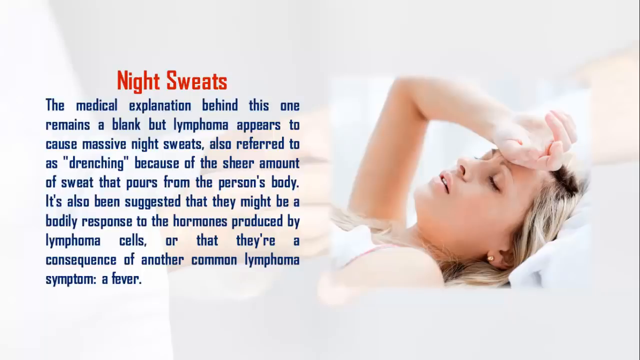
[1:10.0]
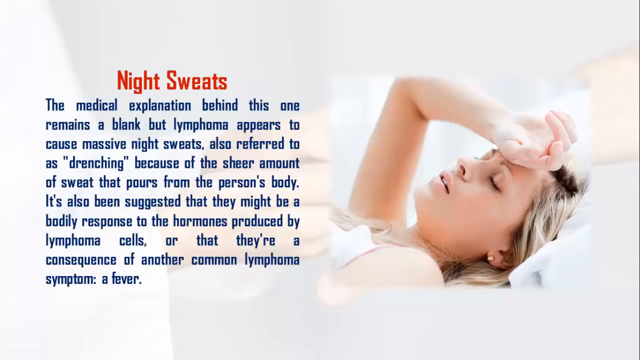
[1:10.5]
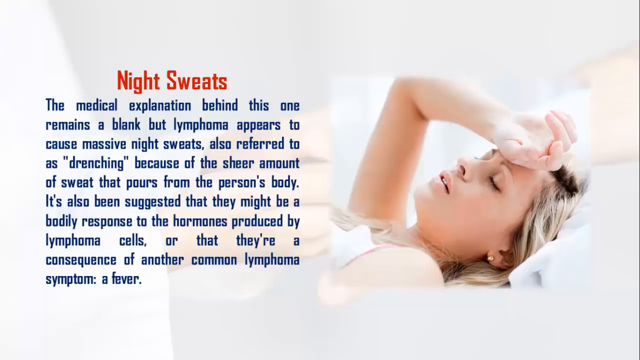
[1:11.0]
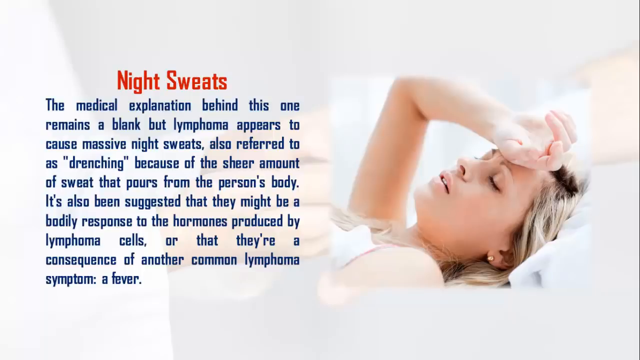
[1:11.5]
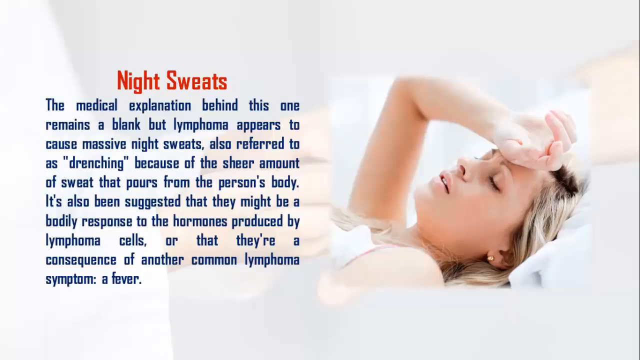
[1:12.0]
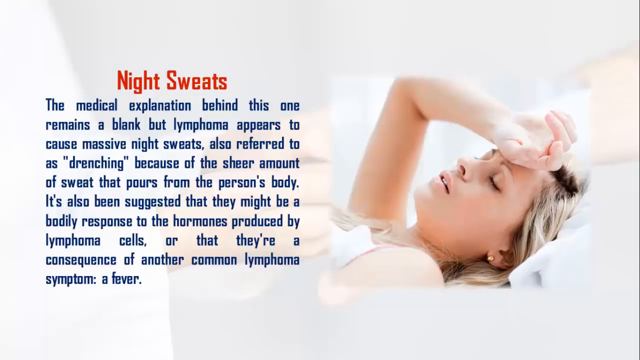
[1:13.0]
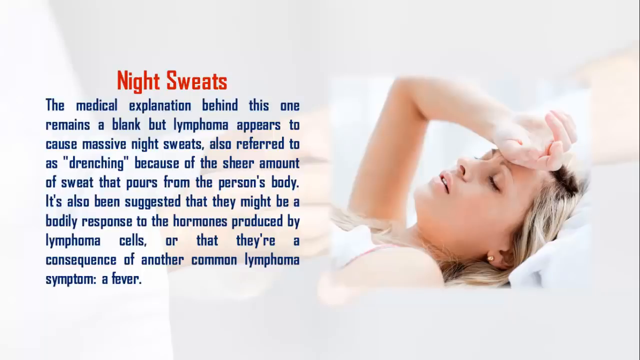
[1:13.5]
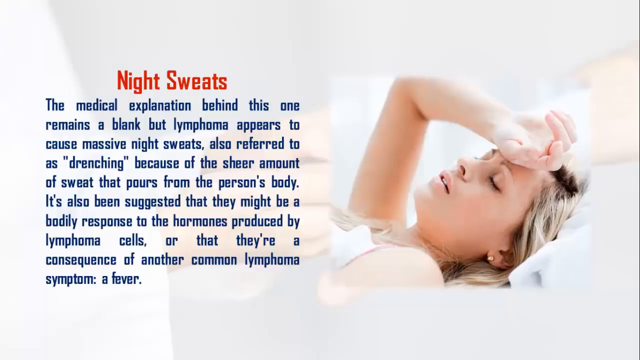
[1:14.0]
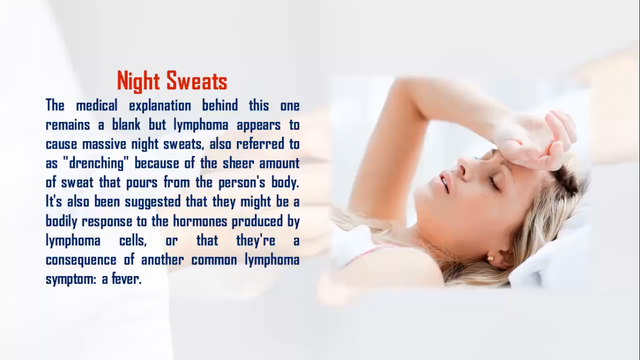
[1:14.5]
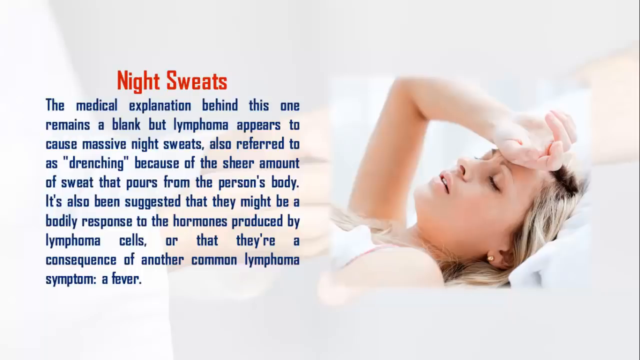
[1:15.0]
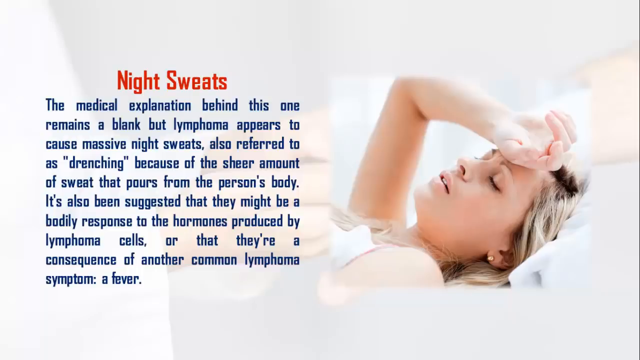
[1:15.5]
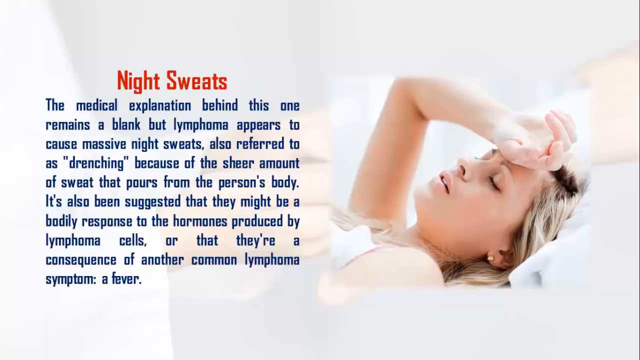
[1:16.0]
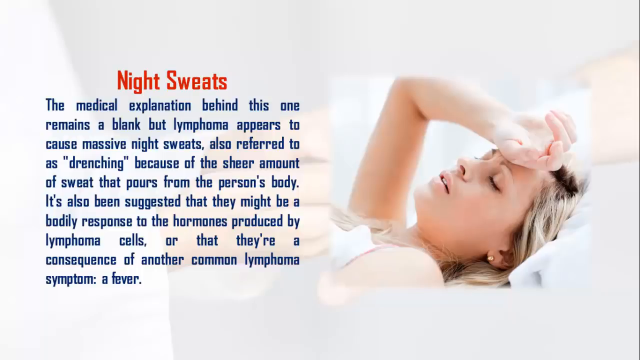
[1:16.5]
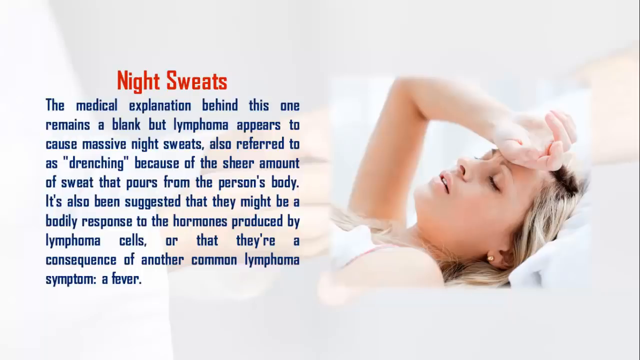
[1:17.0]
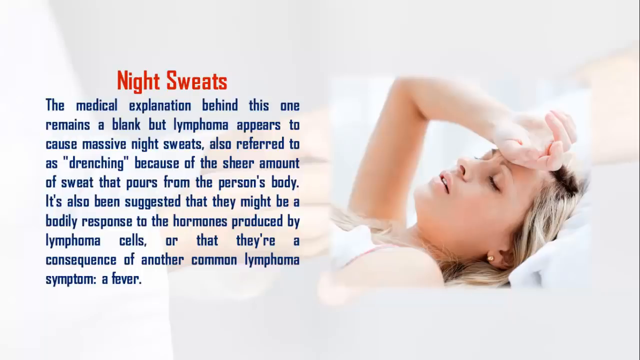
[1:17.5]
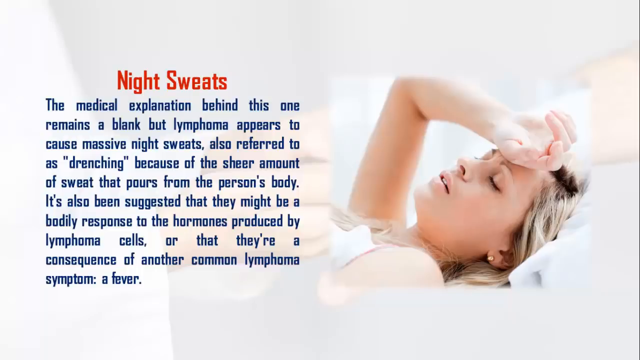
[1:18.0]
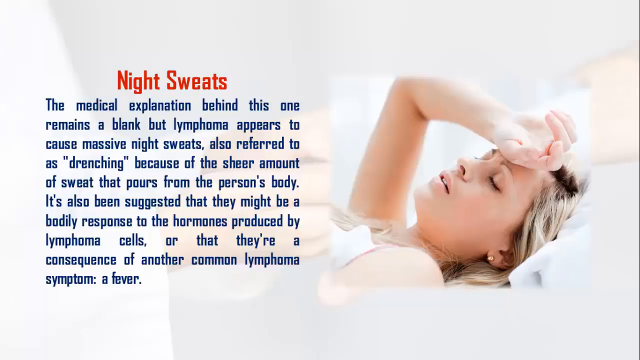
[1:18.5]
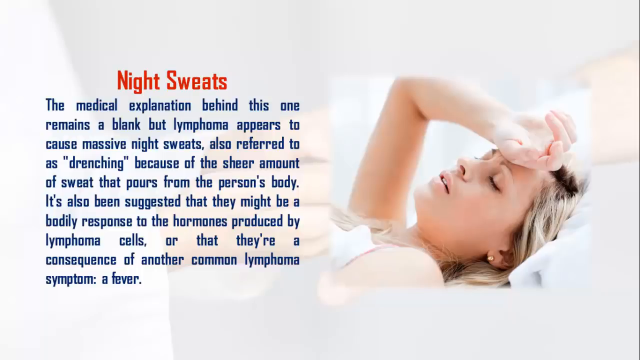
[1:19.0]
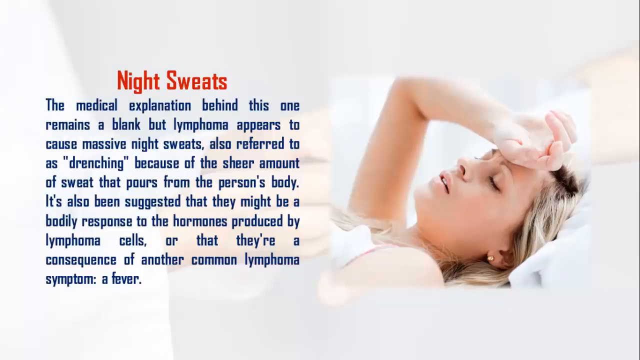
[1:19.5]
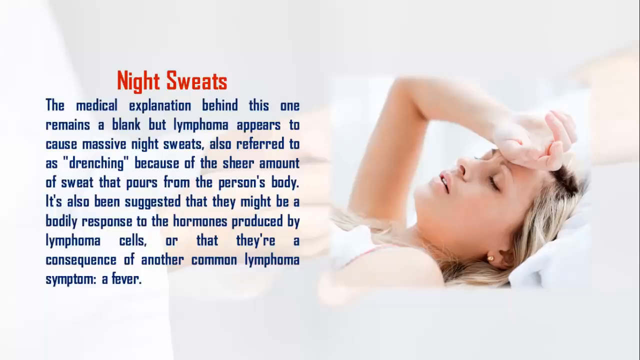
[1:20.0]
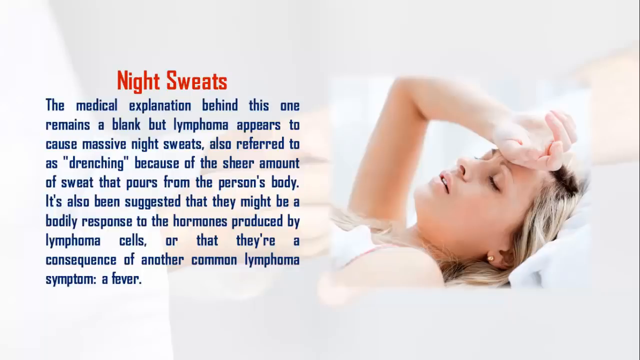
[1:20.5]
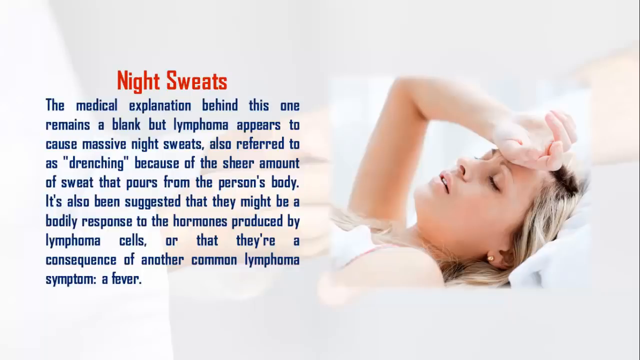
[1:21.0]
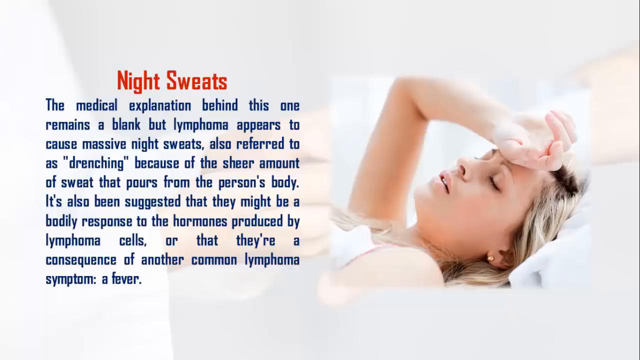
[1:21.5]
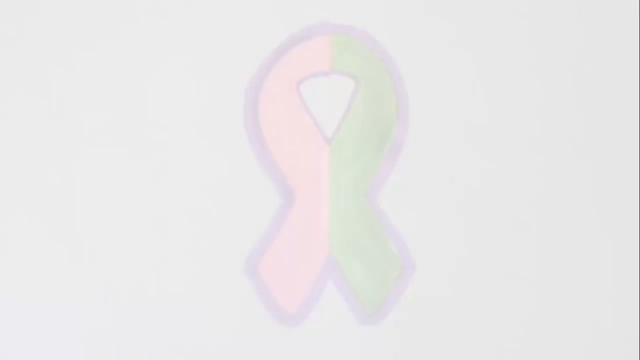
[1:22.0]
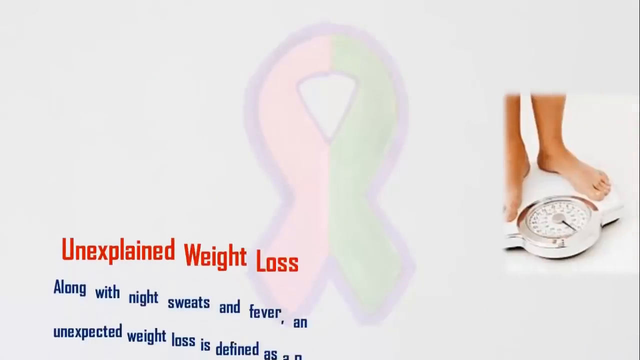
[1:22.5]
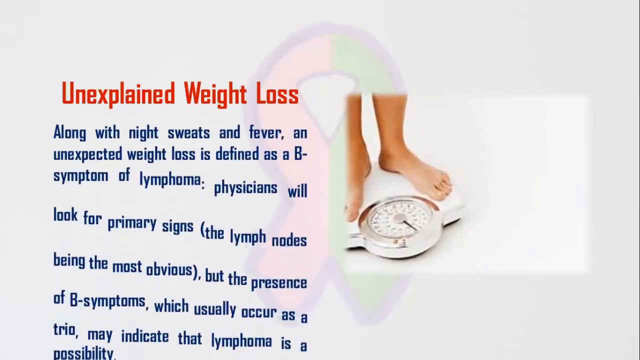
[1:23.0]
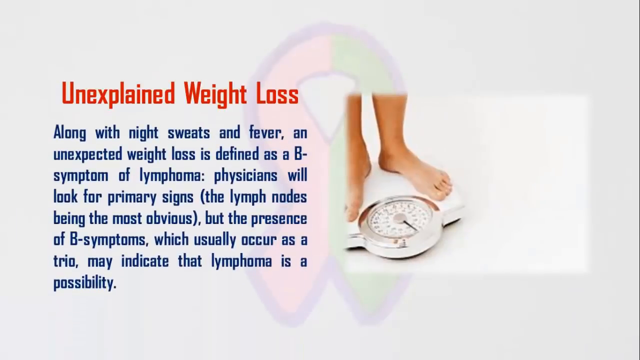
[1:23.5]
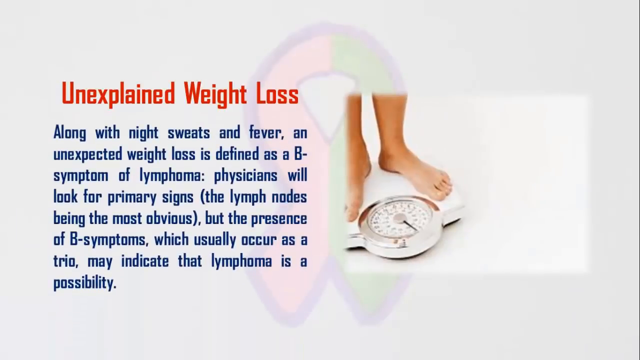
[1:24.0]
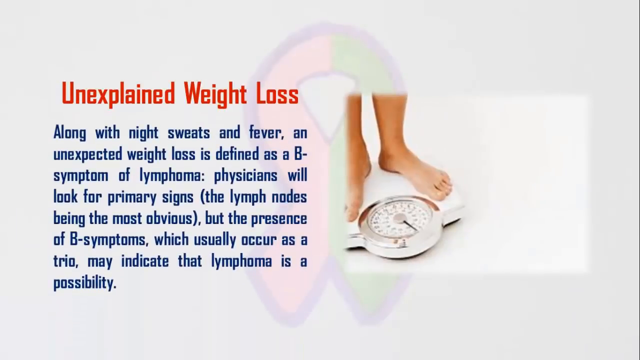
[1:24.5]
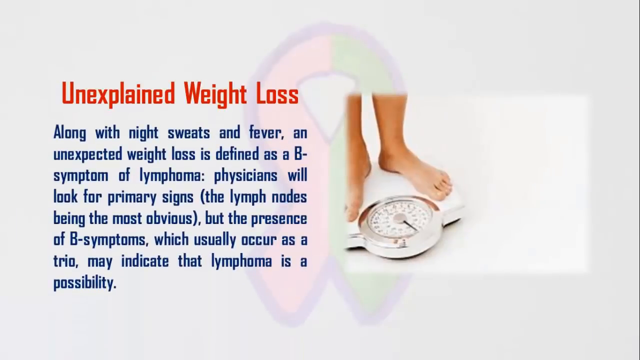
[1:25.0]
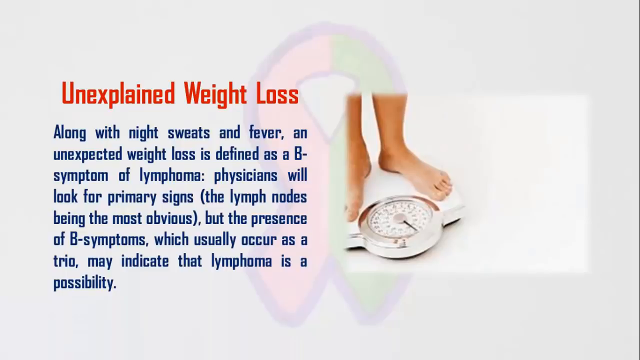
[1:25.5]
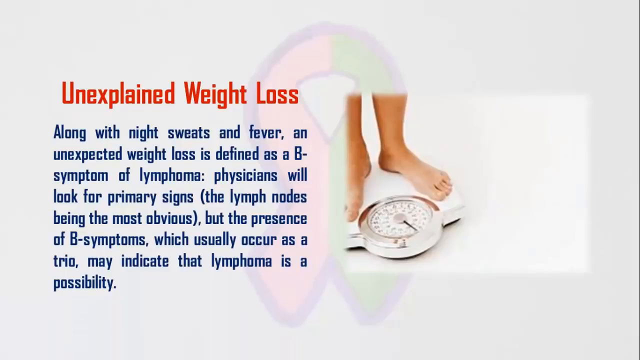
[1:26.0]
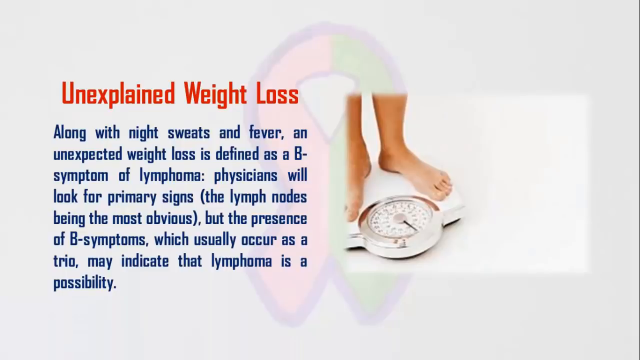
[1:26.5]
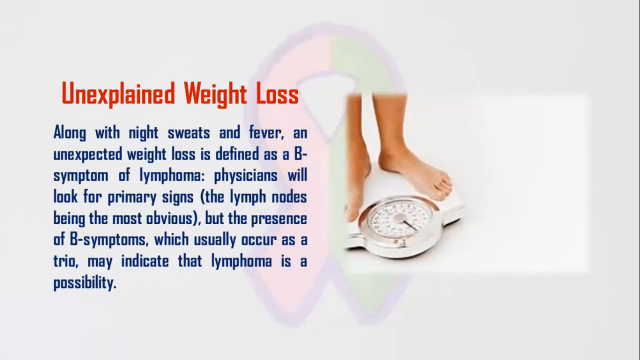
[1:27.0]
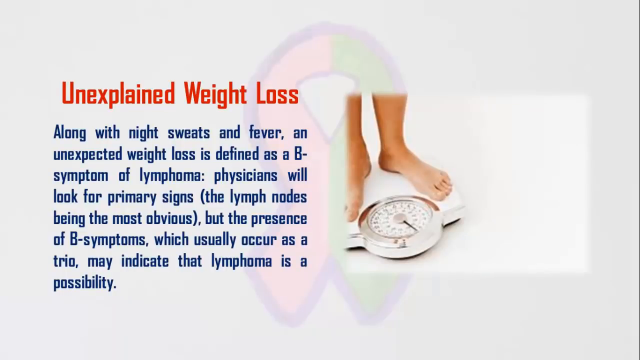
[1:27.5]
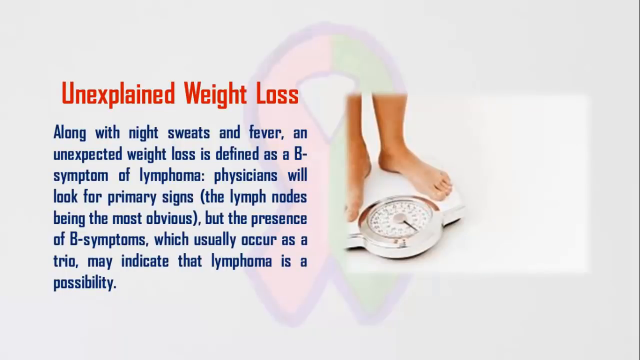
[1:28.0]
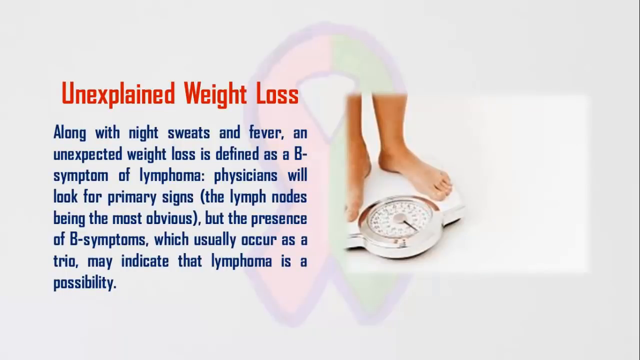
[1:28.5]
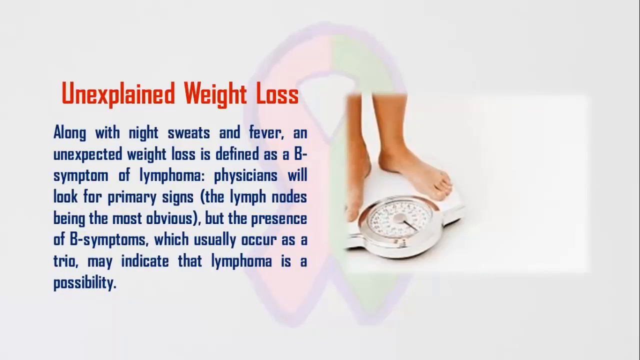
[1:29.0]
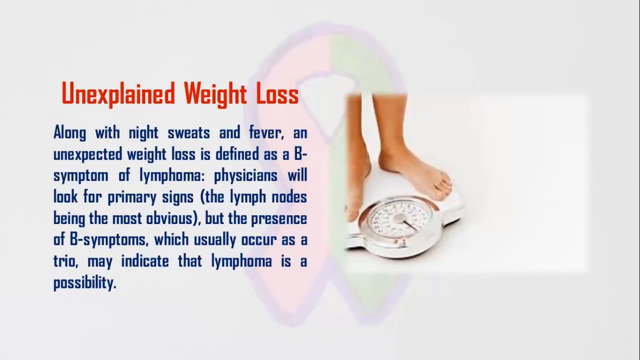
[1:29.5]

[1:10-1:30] The night sweats content starts disappearing. The background is still white and kind of fuzzy, and a small rounded object is now visible in it that looks red on one side and black on the other; it comes around in red and then extends longer on each side, looking like maybe a ribbon. On the right is a small rectangular image with a white background showing a white pair of scales with a large dial, with a lady's feet and part of her legs standing on the scale. To the left, red letters read "unexplained weight loss." Underneath, blue letters read: "Along with night sweats and fever and unexpected weight loss is defined as a B symptom of lymphoma. Physicians will look for primary signs and that's the lymph nodes being the most obvious. But the presence of B symptoms, which usually occur as a trio, may indicate that lymphoma is a possibility."